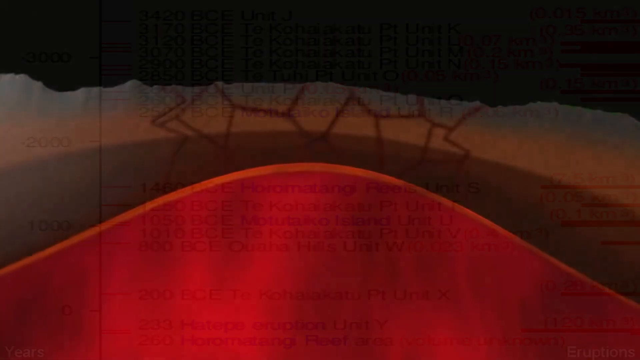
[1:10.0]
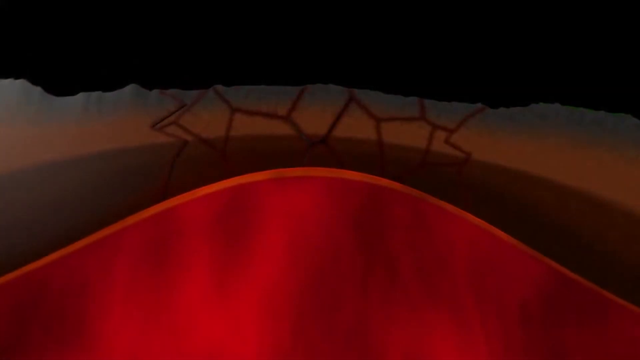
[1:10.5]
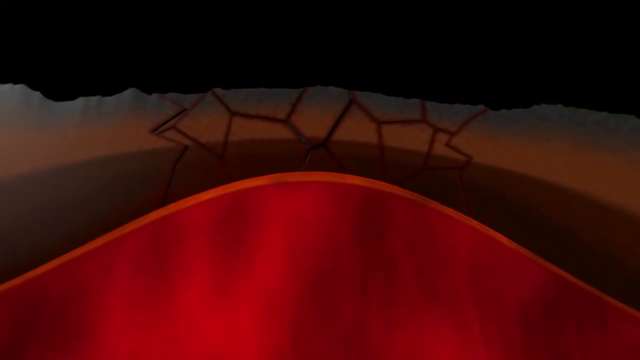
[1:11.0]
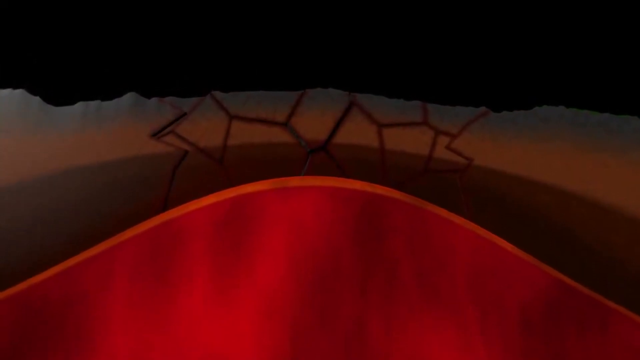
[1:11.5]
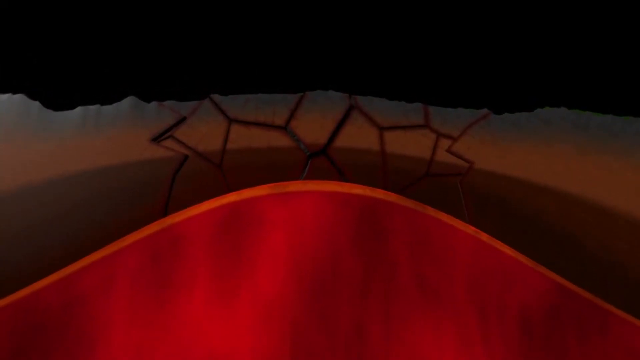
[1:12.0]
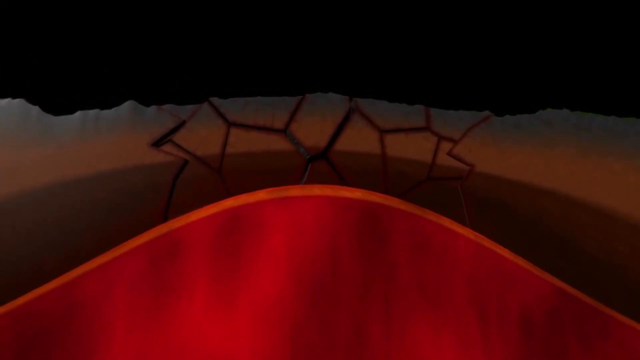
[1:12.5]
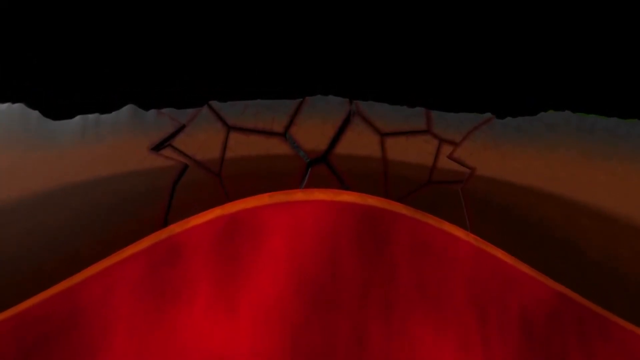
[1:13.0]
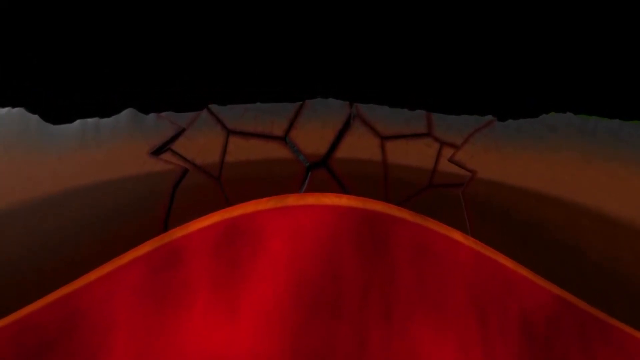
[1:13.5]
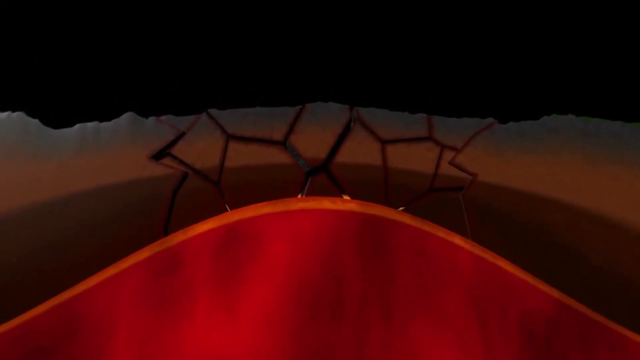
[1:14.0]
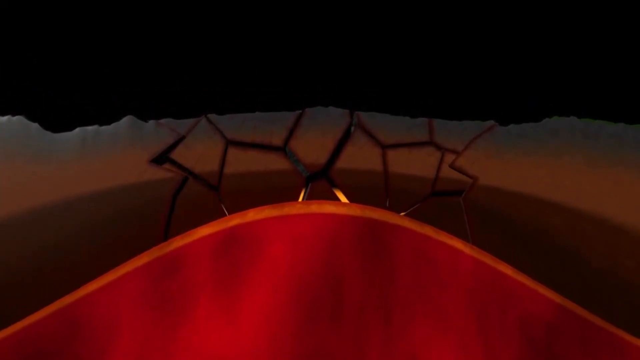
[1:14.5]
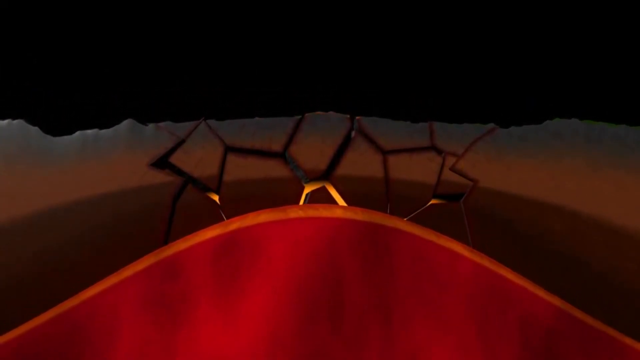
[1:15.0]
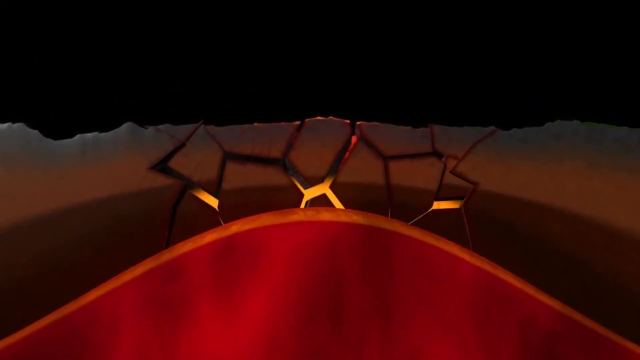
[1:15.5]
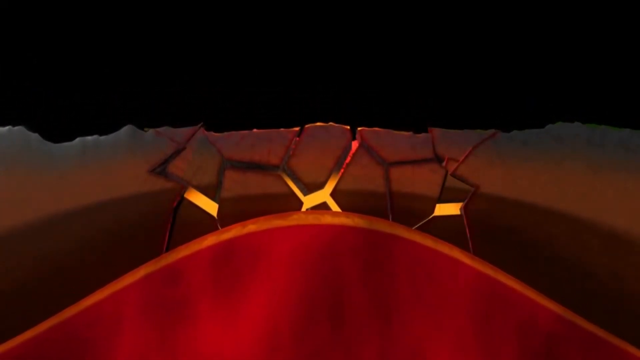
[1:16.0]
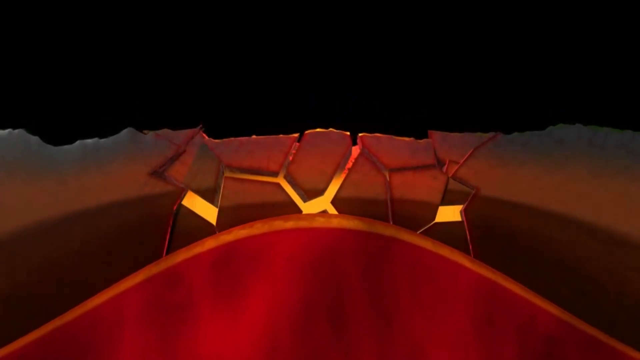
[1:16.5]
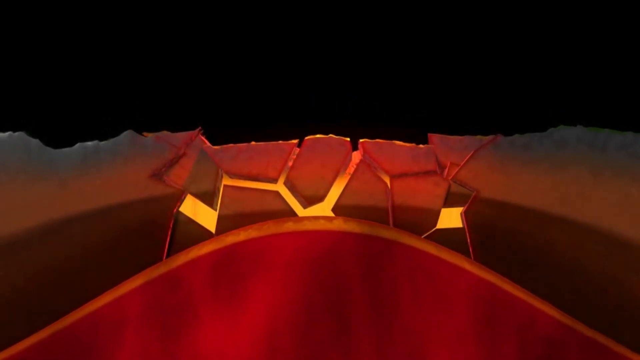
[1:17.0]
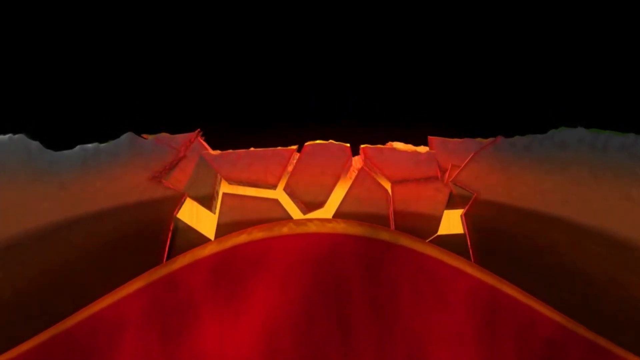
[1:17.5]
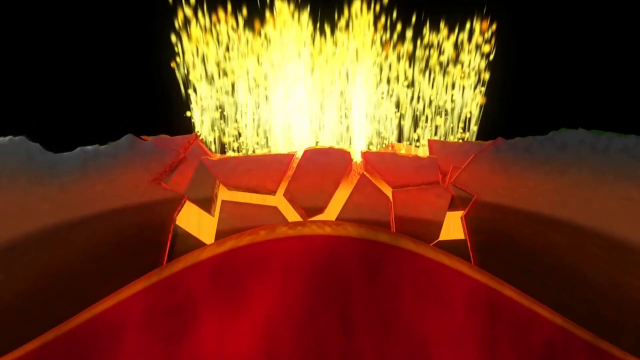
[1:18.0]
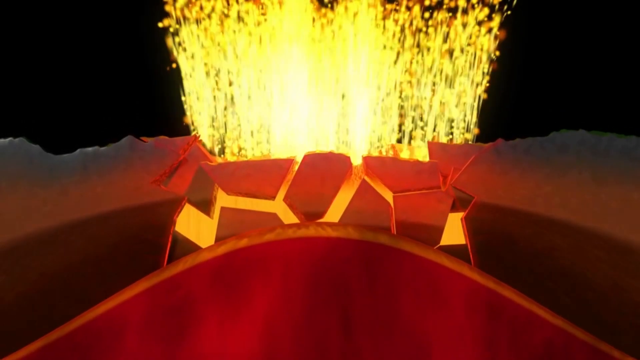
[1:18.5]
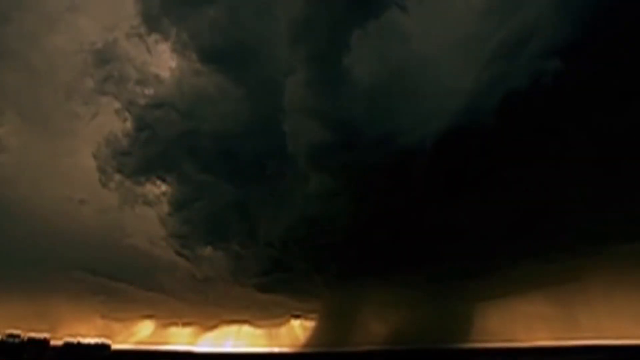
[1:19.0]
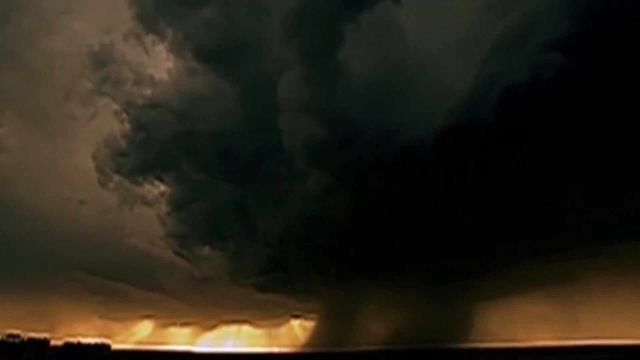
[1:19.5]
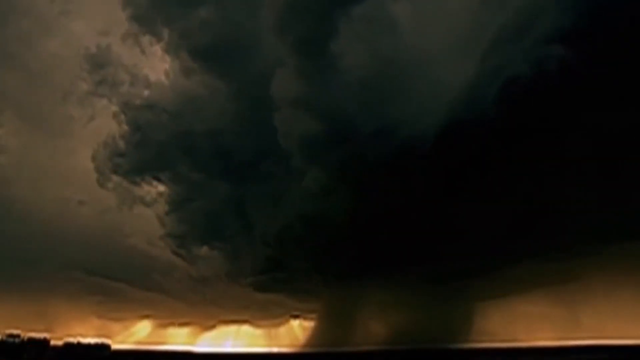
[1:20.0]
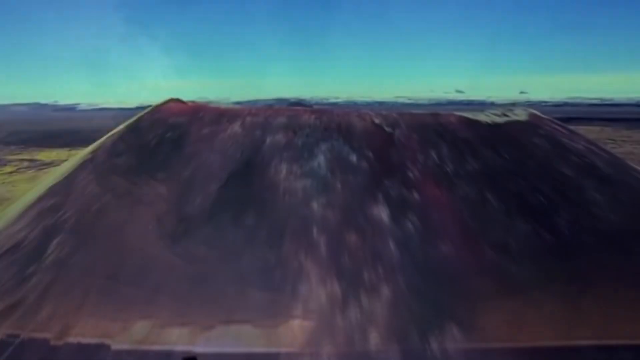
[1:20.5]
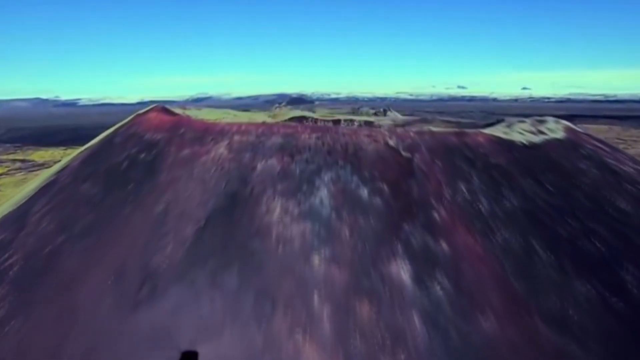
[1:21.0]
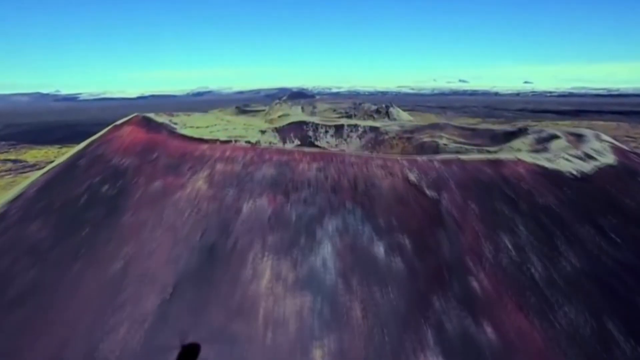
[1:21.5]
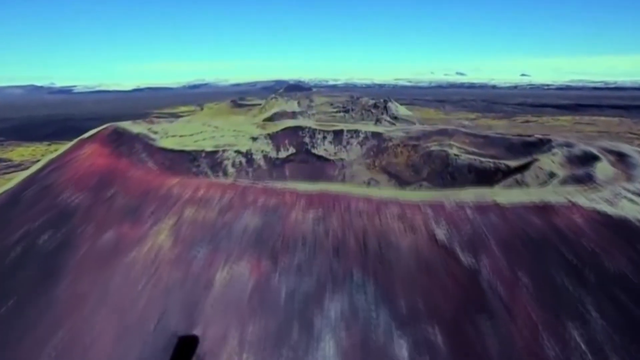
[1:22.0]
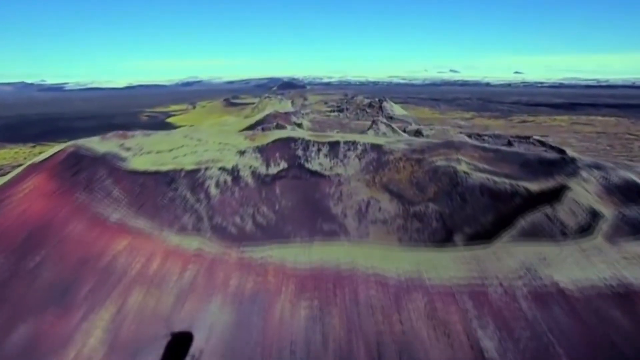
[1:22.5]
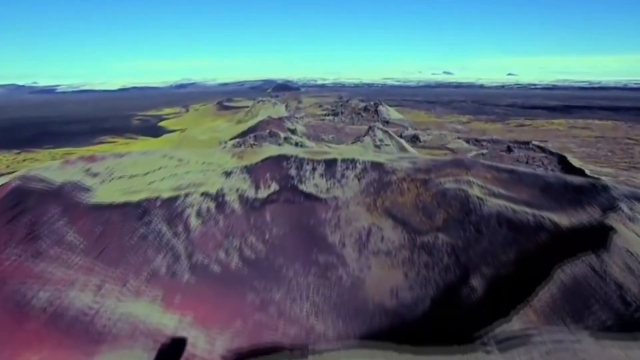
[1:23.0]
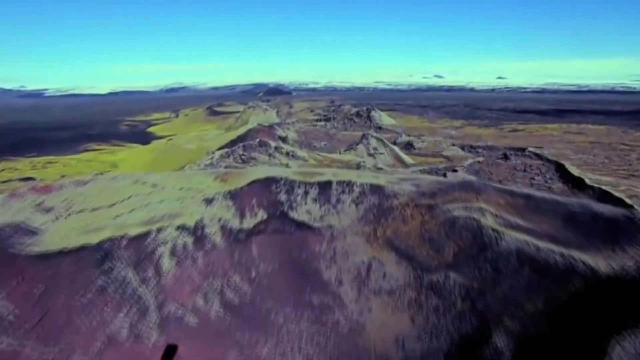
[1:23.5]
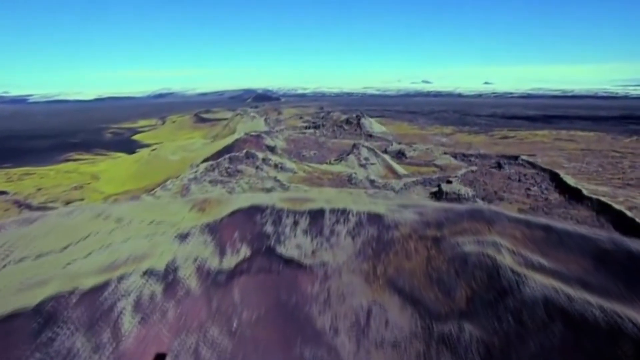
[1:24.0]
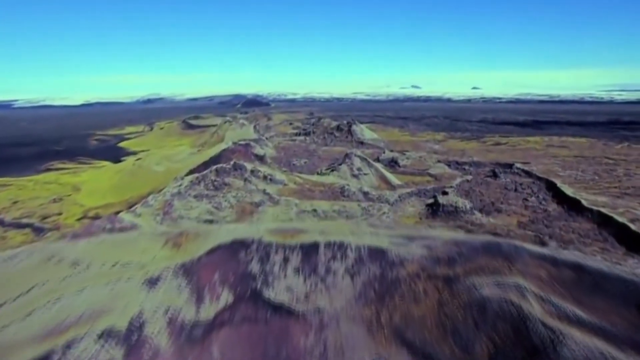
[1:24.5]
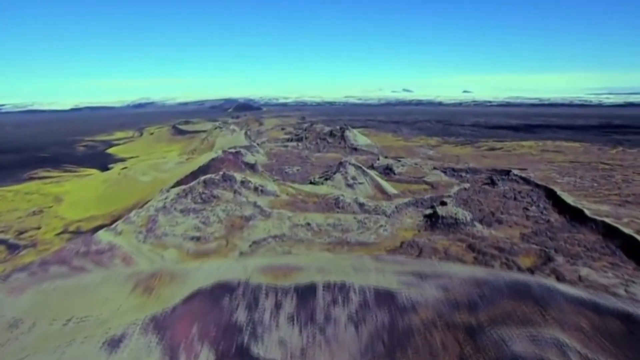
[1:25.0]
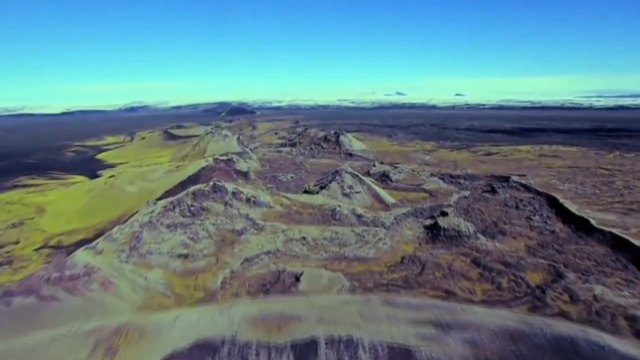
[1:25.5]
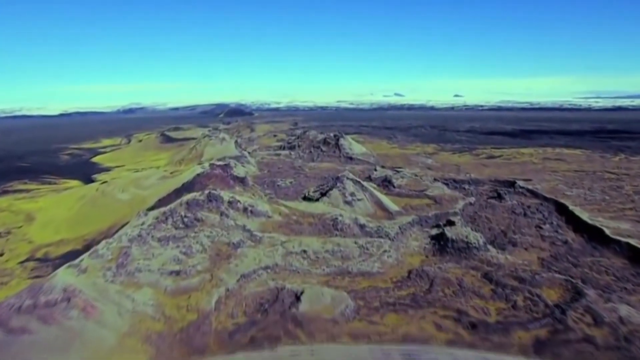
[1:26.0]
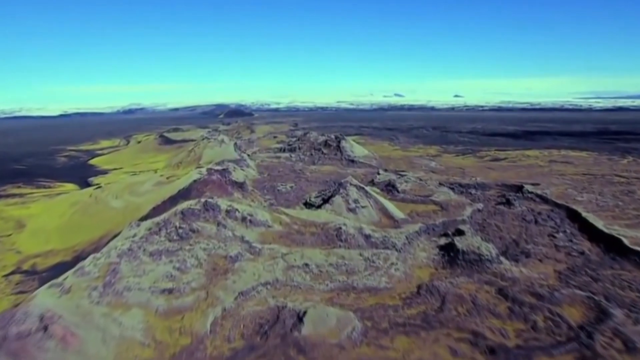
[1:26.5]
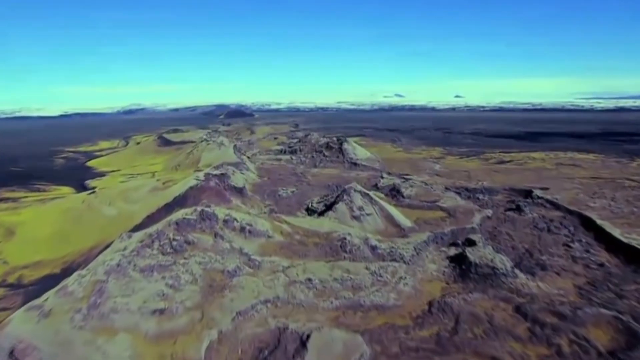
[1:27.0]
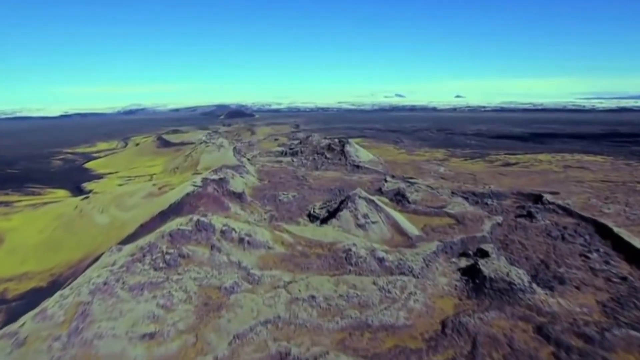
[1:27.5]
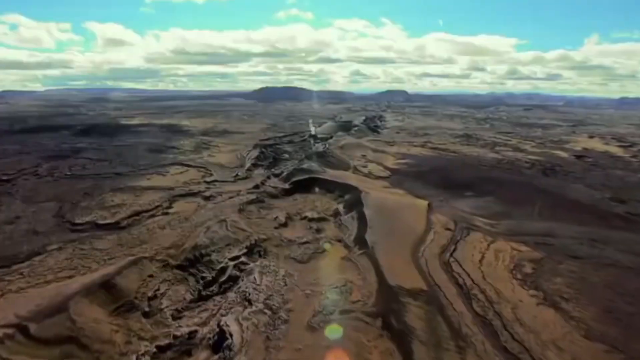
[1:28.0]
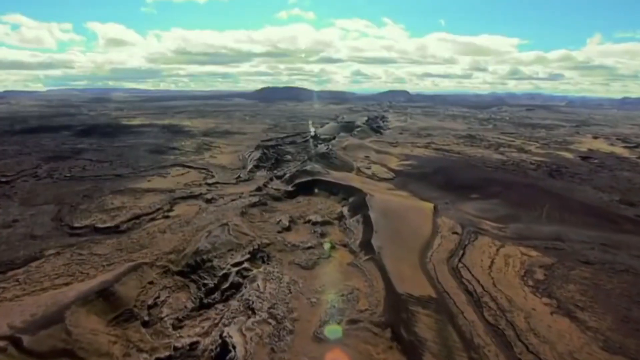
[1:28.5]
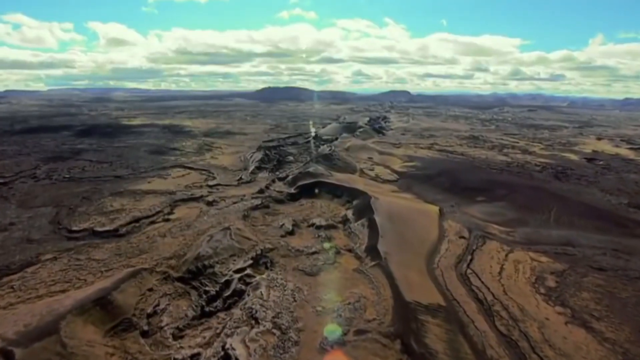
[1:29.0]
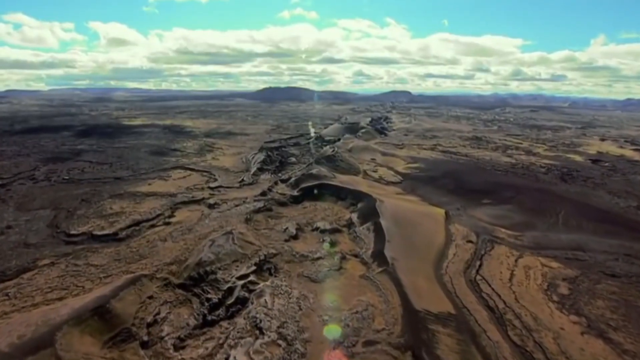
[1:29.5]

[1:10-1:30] An animated representation of a volcanic eruption is shown. At the very bottom is a substantial pocket of red covered by a thin veil of orange, apparently magma and lava, bubbling up into what look to be pockets of earth: a darker brown pocket at the bottom and a lighter brown pocket with topography at the top. Fissures form through both layers of earth, and what looks to be an eruption begins. As the cracks widen, the orange magma seeps up to the surface, and finally the animation shows the eruption and expulsion of lava and magma. The next shot is a flyover of a volcanic segment; it is unclear whether it is multiple volcanoes or a single one, but it looks quite substantial.